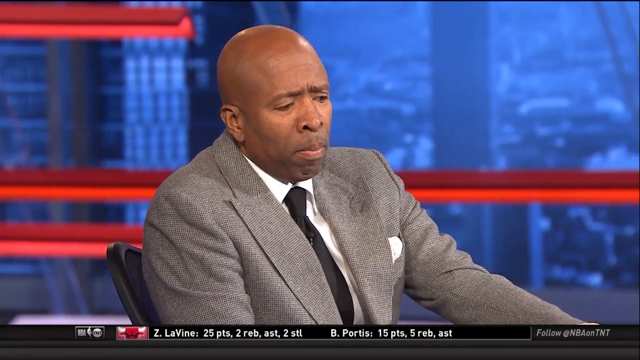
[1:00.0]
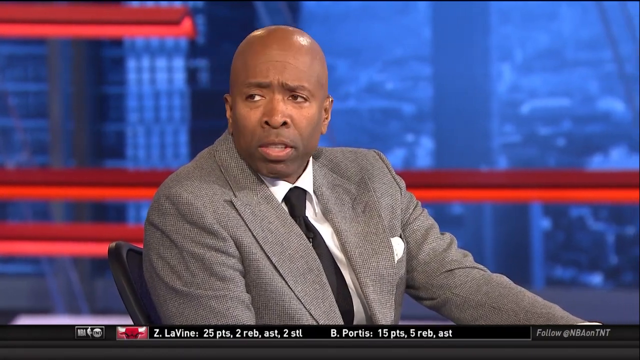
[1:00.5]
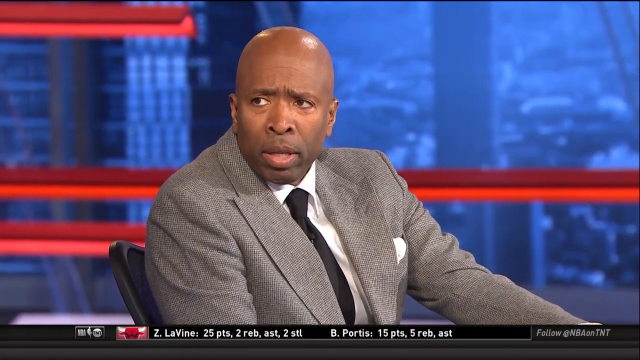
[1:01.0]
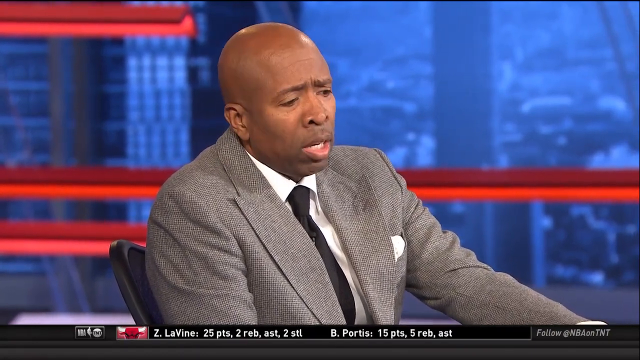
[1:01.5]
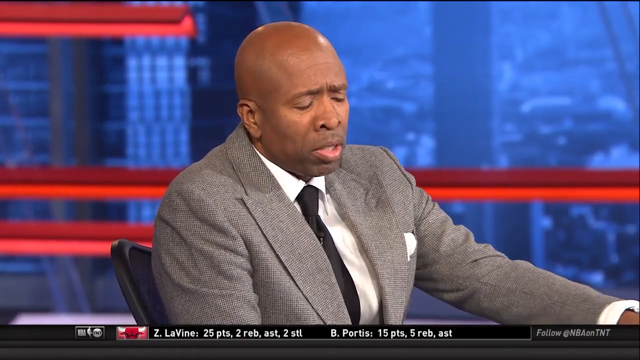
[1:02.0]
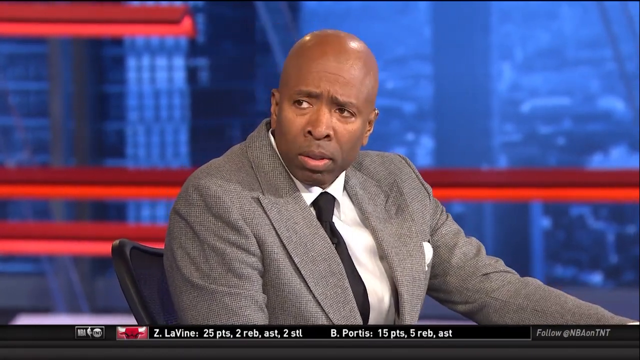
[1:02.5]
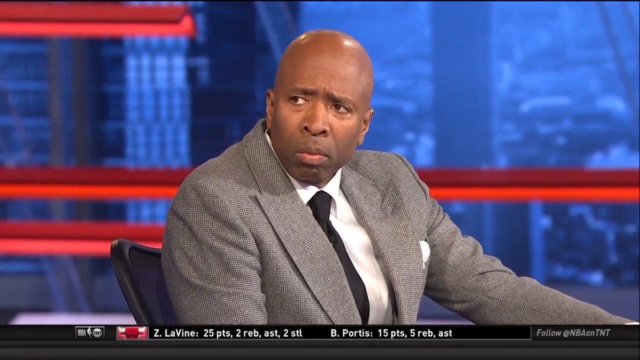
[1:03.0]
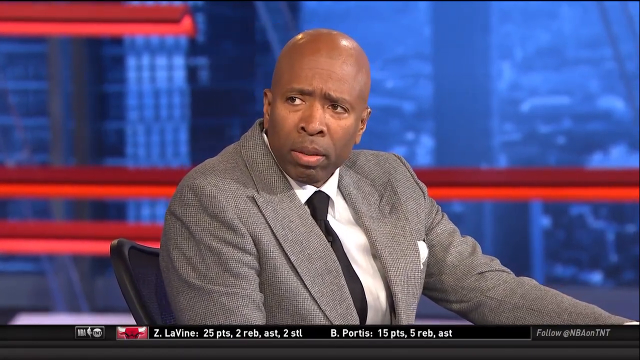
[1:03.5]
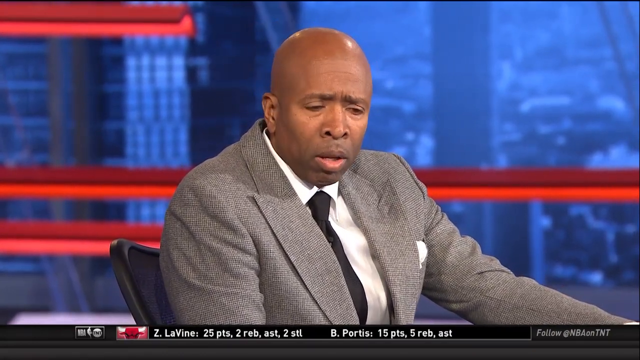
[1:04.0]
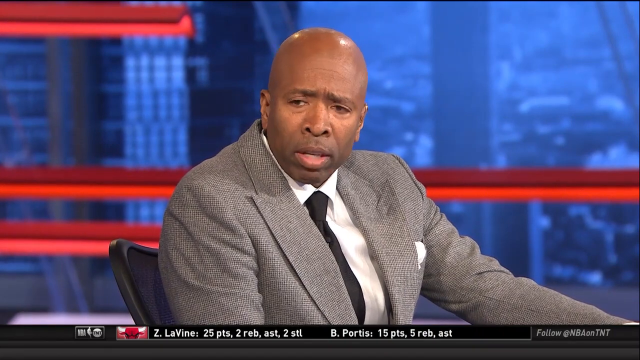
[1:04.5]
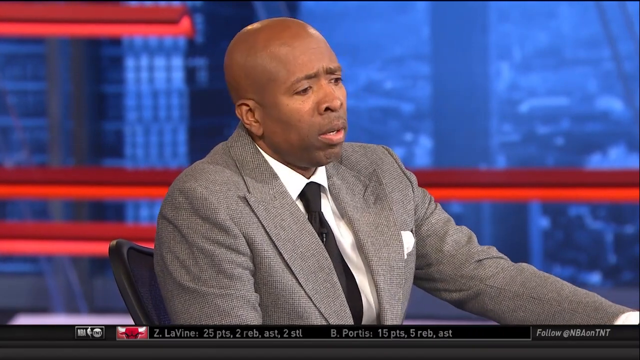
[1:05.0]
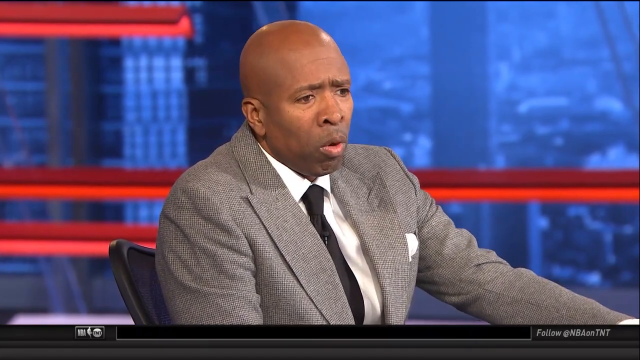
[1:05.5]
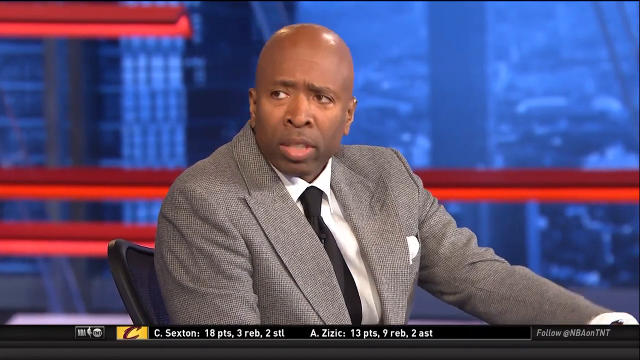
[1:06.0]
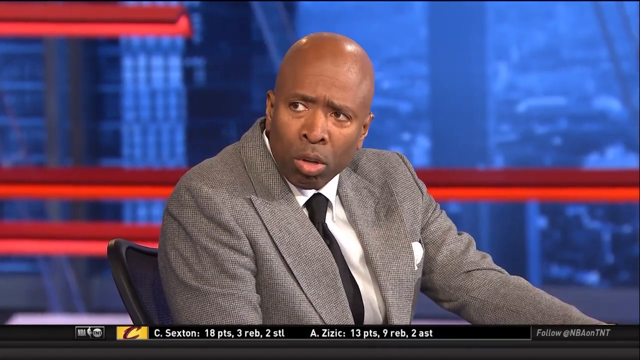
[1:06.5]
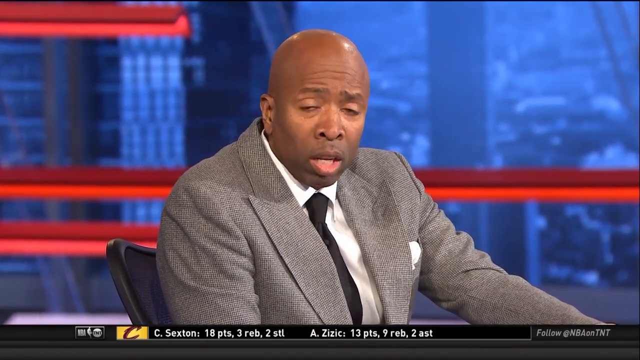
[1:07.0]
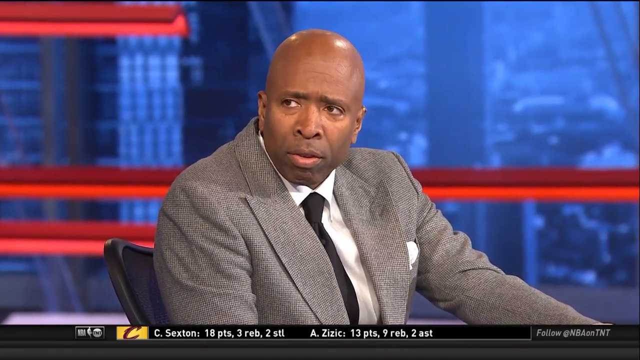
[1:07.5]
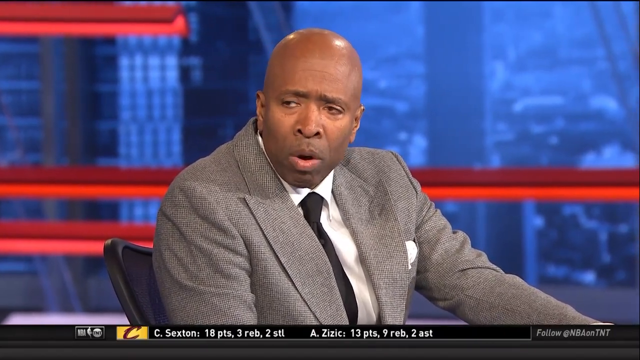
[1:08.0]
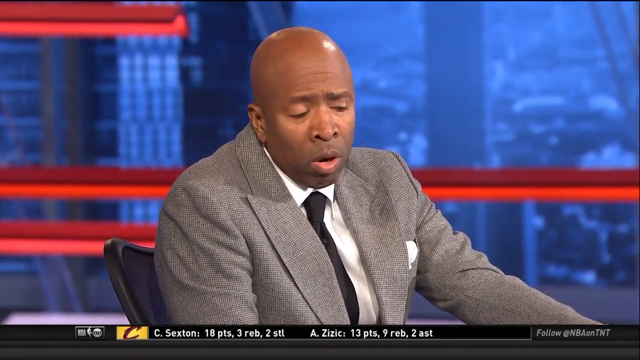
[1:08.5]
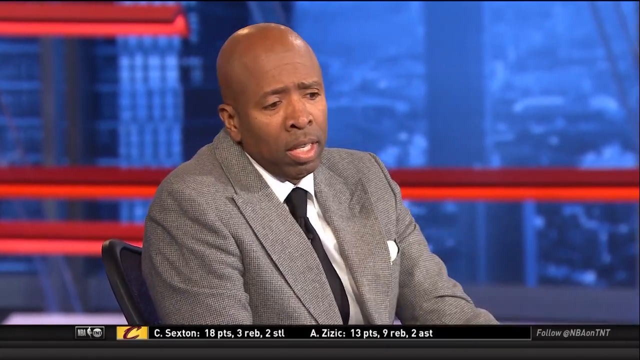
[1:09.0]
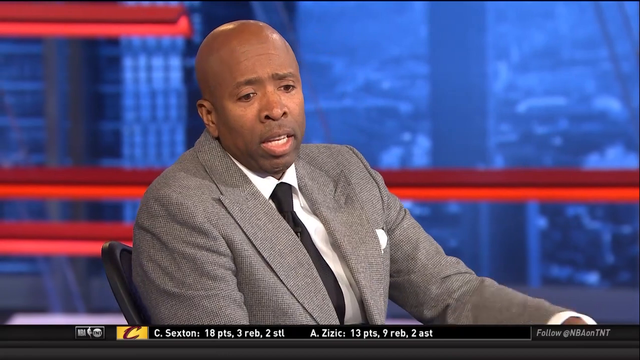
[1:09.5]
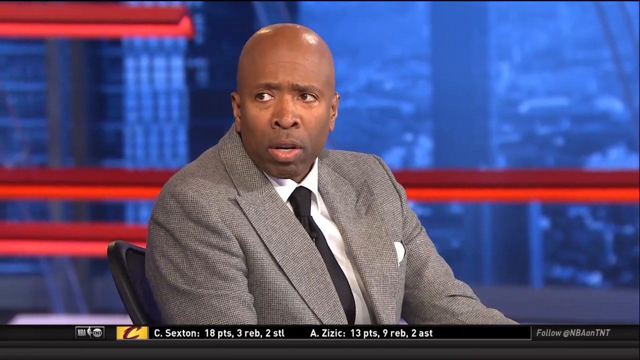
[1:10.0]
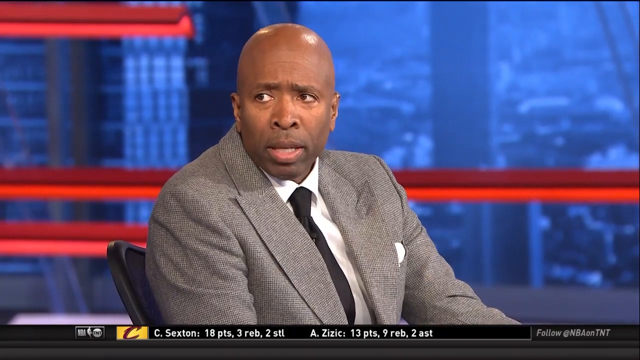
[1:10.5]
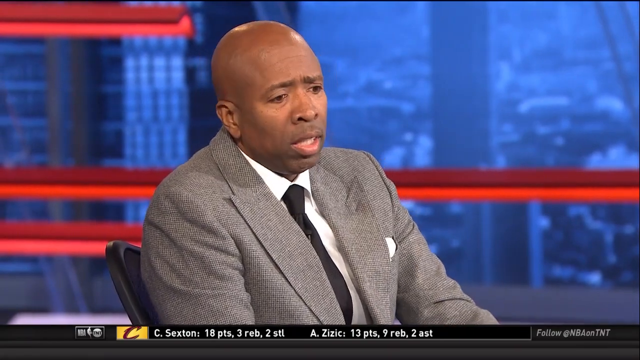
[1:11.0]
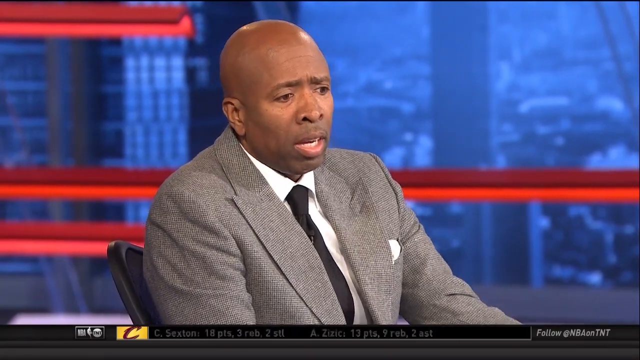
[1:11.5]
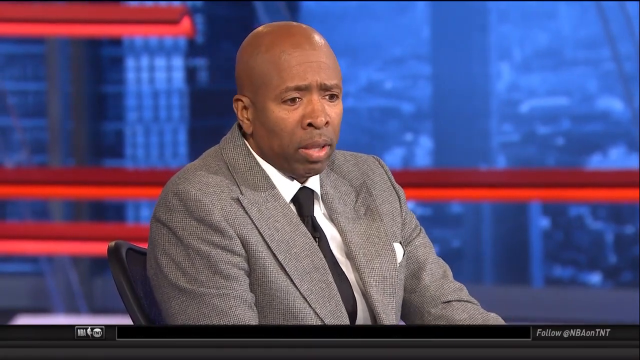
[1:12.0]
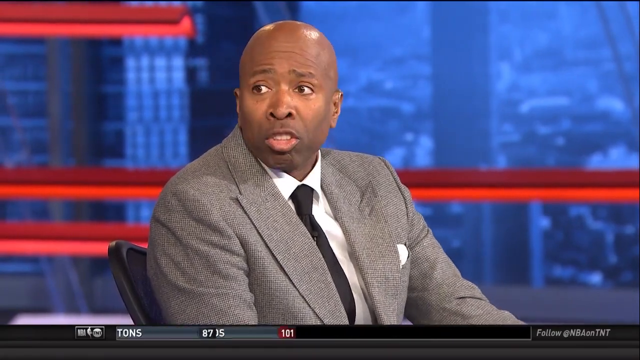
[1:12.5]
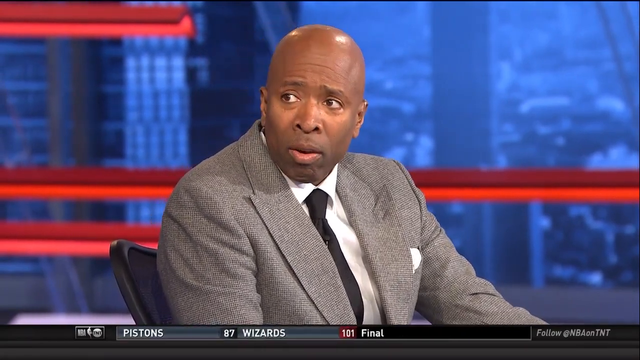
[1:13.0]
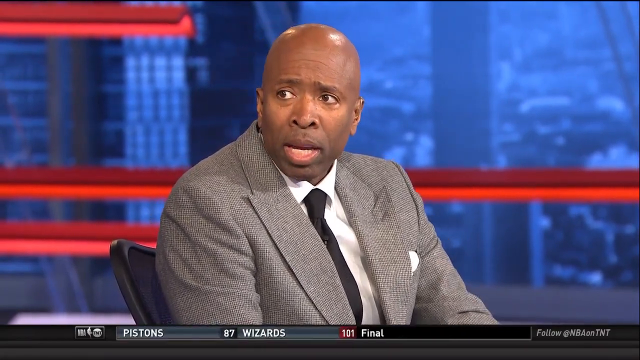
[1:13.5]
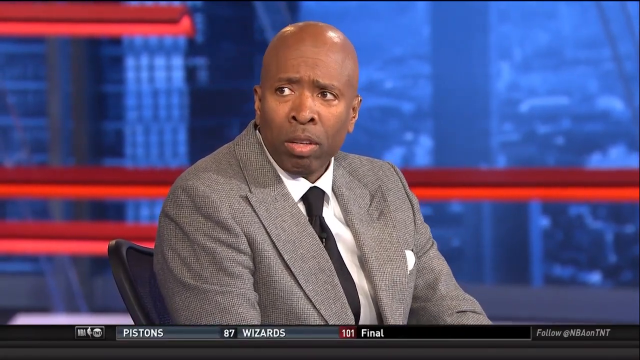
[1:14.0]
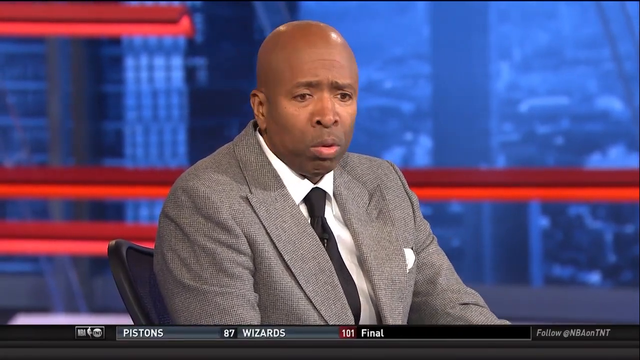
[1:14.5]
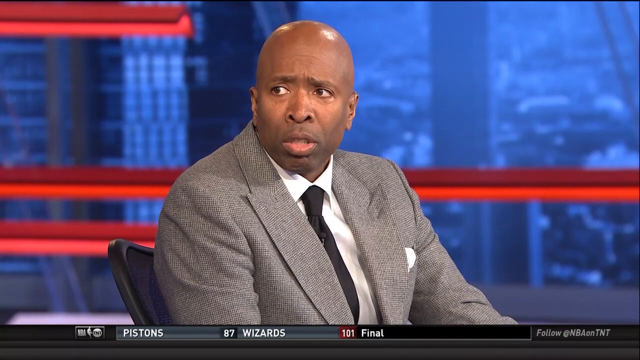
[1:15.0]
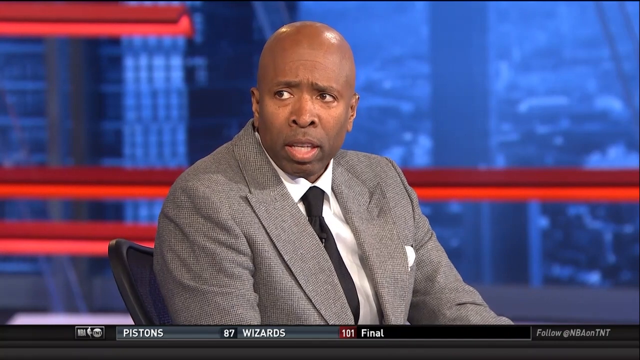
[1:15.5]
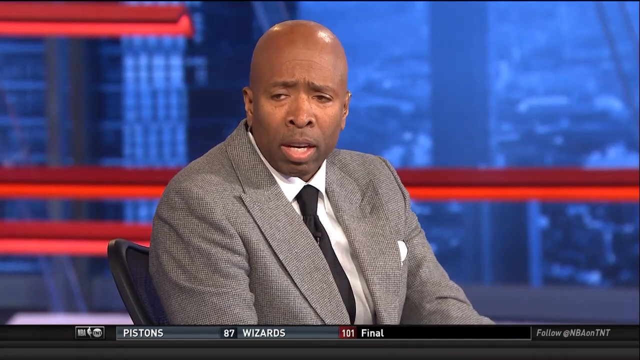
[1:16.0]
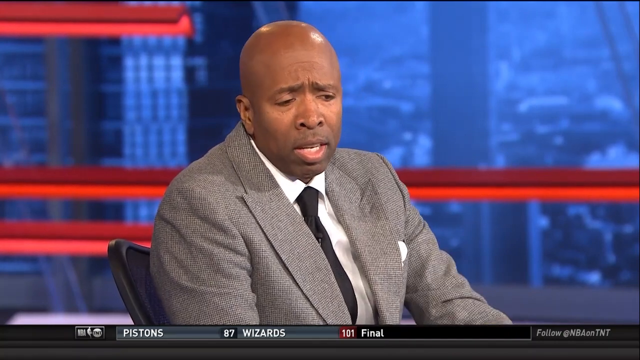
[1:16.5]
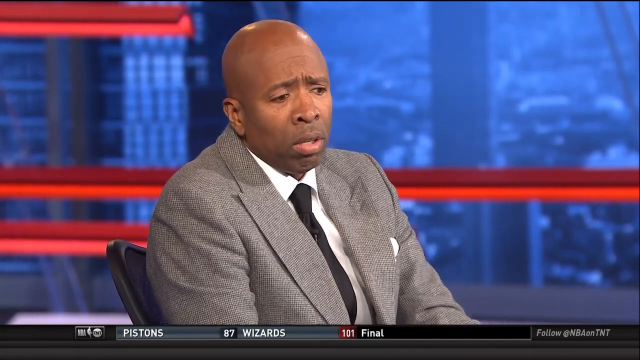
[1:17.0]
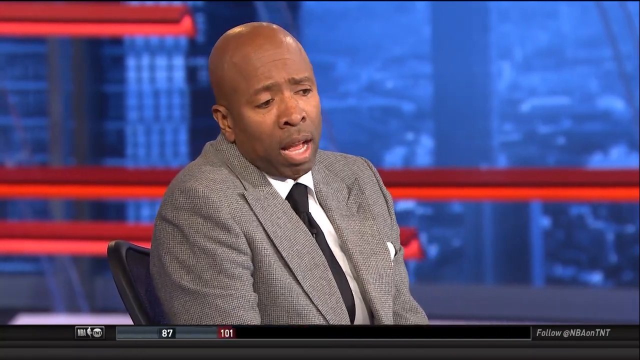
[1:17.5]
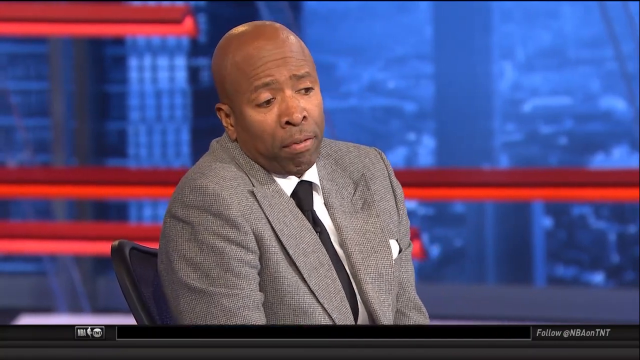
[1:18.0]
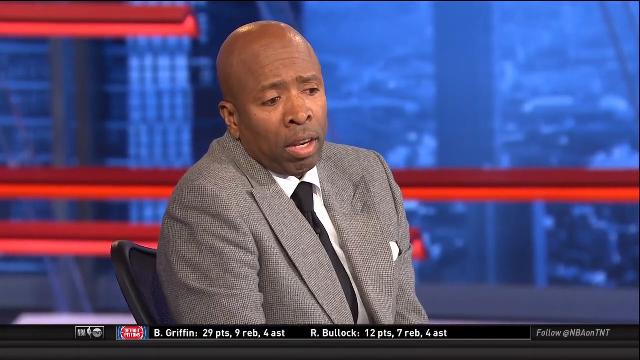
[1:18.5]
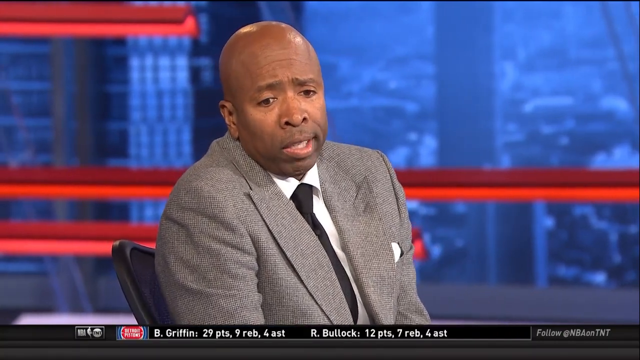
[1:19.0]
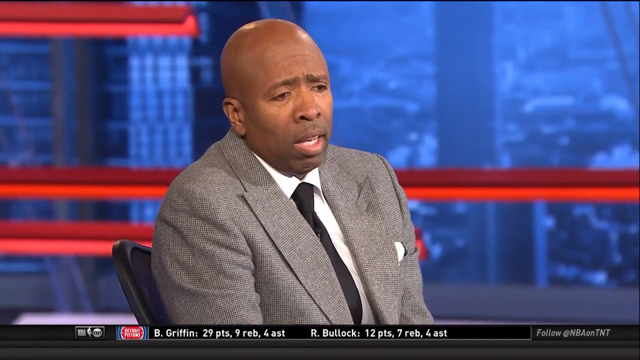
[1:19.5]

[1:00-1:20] A black man sits in a black chair speaking to the person to his right. He wears a white button-up shirt with a black tie and a gray suit jacket over it, with a white handkerchief in his left breast pocket. While speaking he looks forward, then turns his head to the right toward the person beside him. In the background is a blue screen with red stripes running horizontally: the top stripe spans only half the screen, the middle one goes across the whole screen, and the one beneath it reaches only the halfway mark. As he speaks, names appear at the bottom of the screen with numbers beside them, such as "18 points, 3 rebounds" and "13 points, 9 rebounds," and then text reads "Pistons 87, Wizards 101 final."